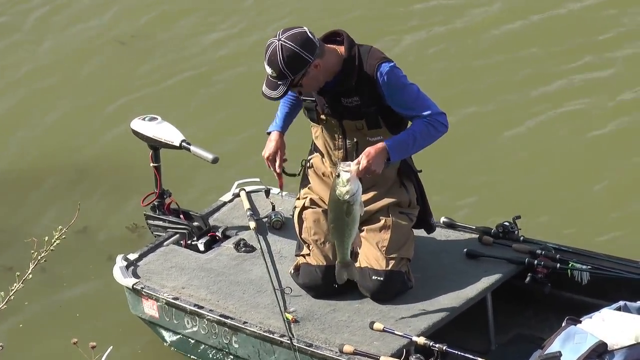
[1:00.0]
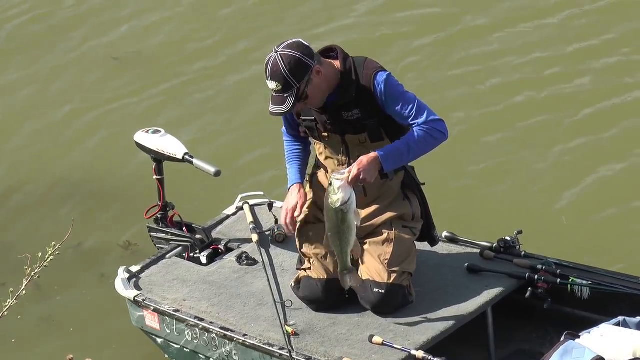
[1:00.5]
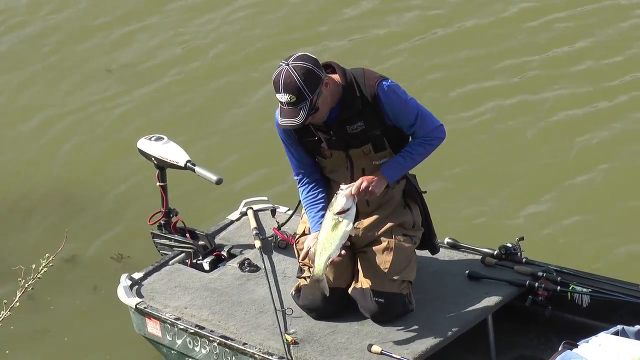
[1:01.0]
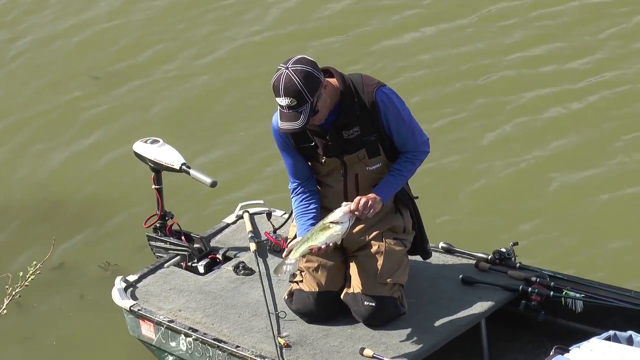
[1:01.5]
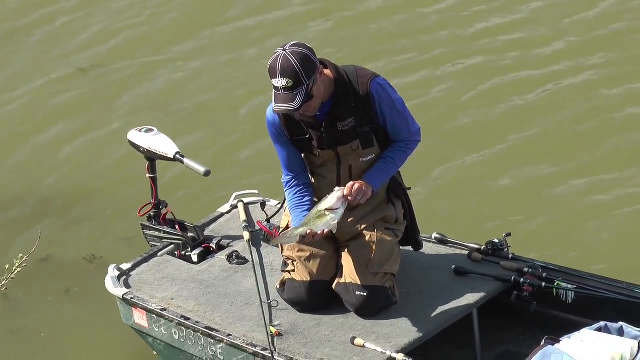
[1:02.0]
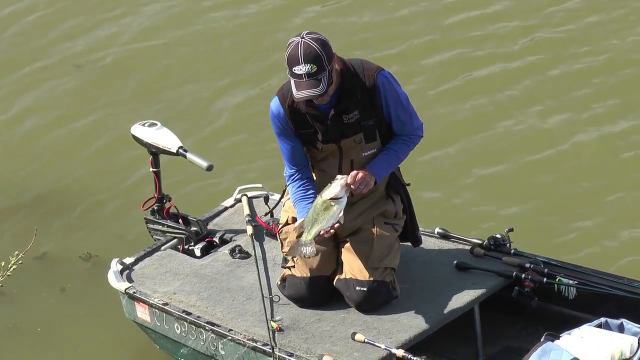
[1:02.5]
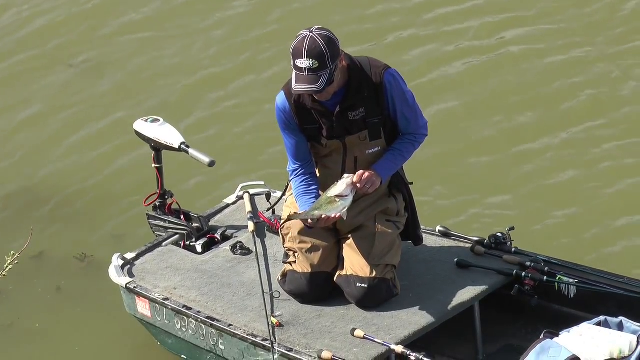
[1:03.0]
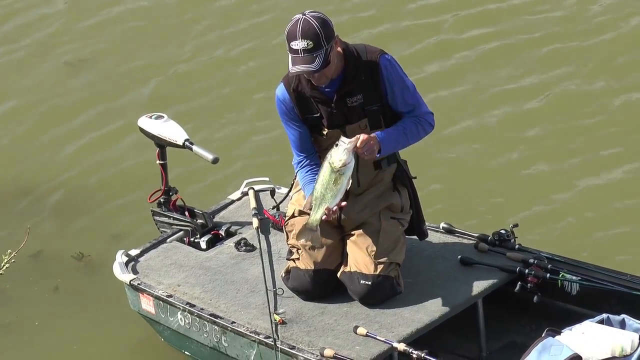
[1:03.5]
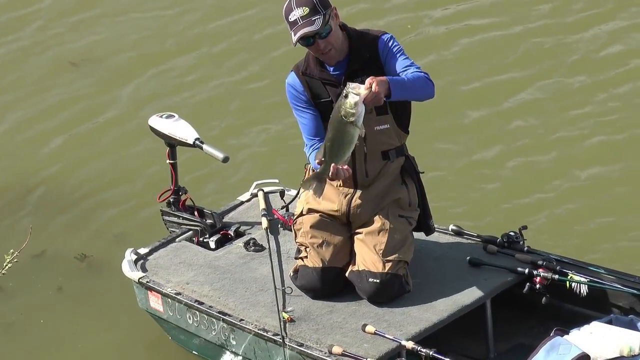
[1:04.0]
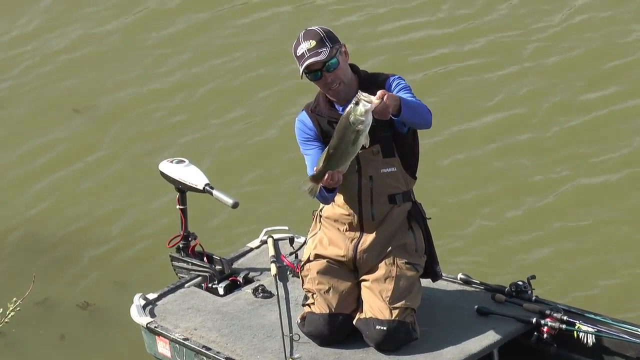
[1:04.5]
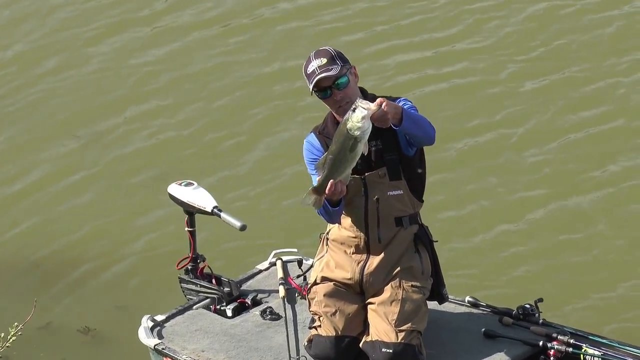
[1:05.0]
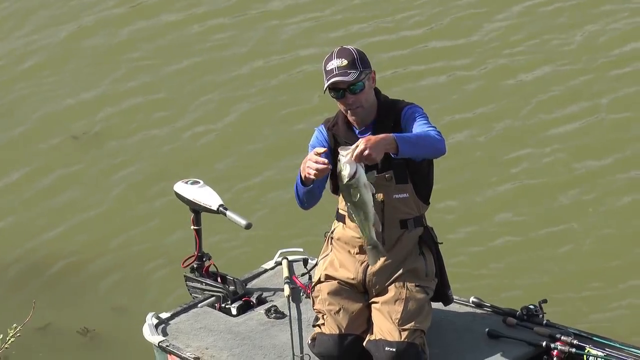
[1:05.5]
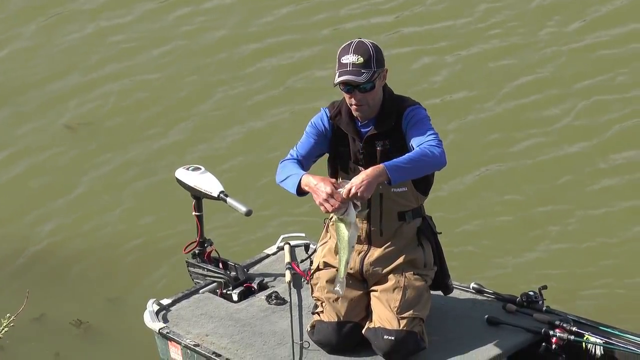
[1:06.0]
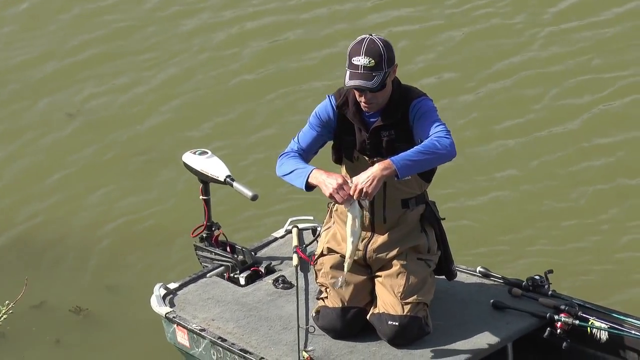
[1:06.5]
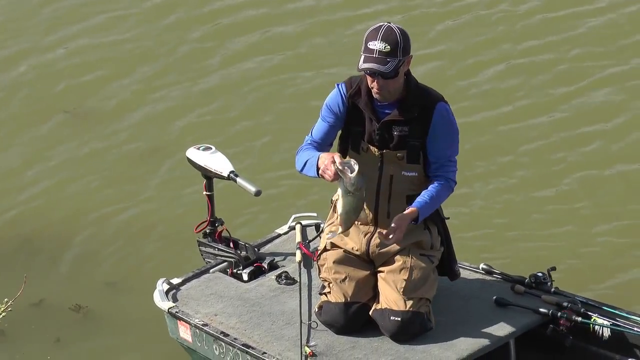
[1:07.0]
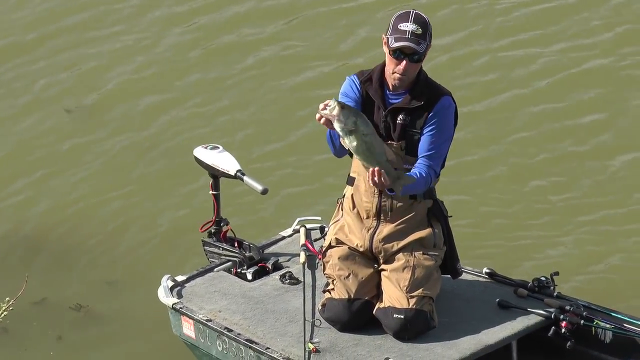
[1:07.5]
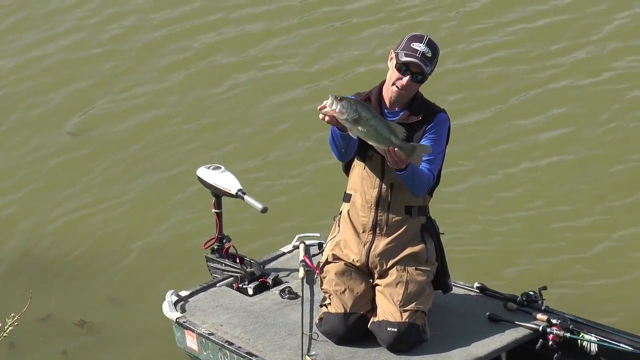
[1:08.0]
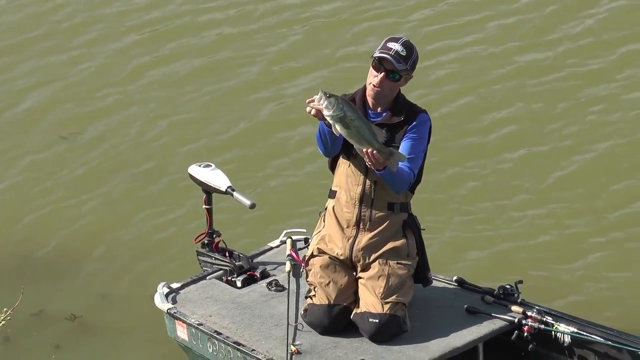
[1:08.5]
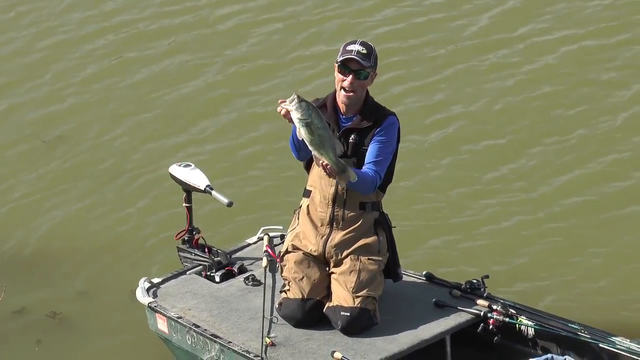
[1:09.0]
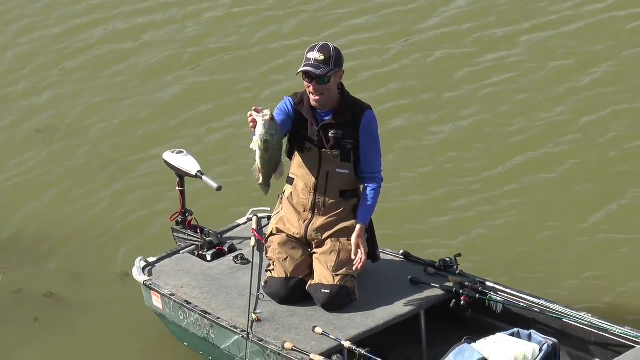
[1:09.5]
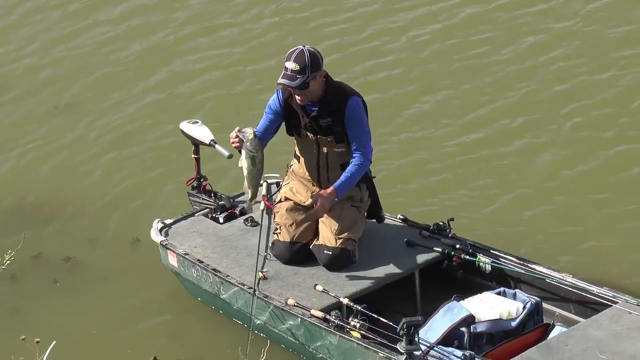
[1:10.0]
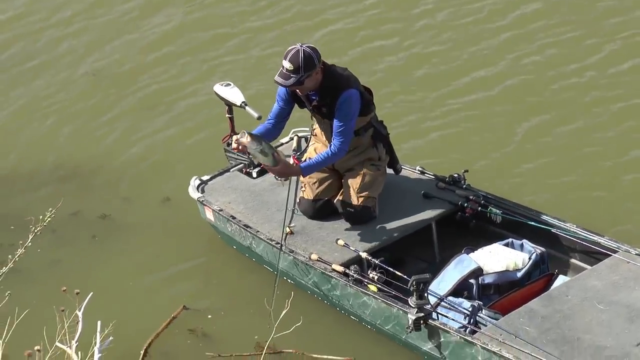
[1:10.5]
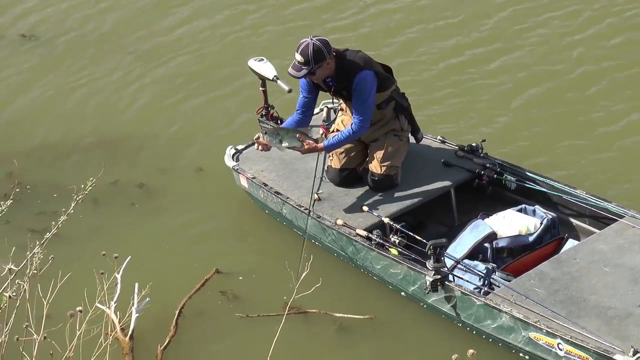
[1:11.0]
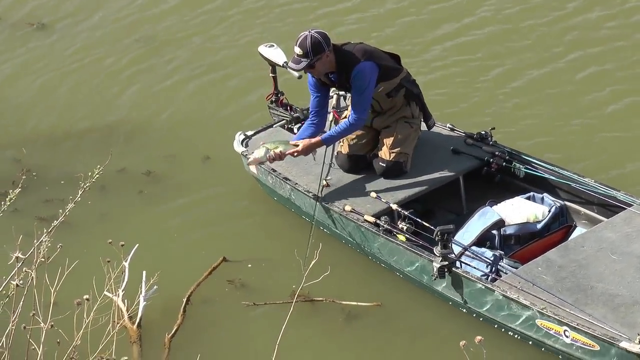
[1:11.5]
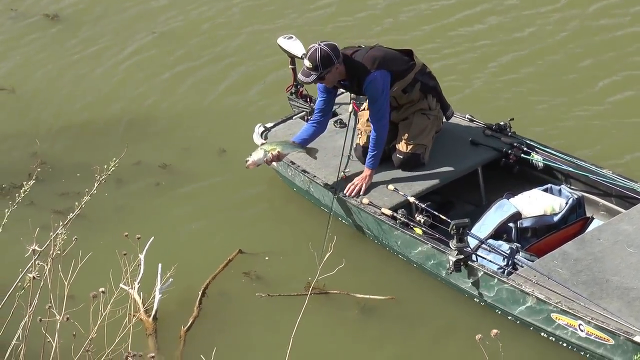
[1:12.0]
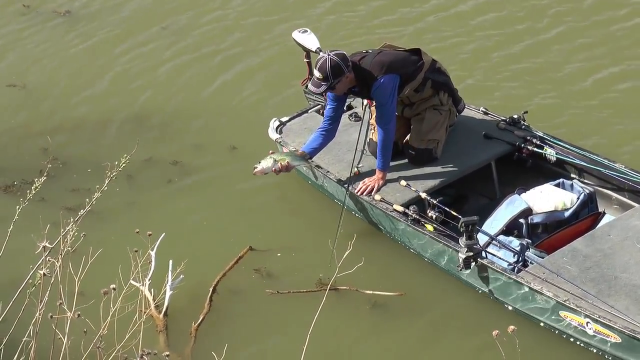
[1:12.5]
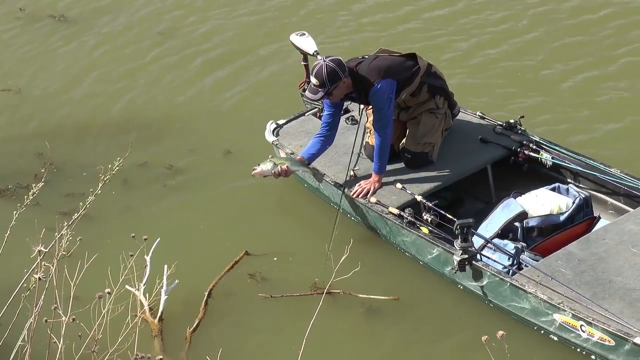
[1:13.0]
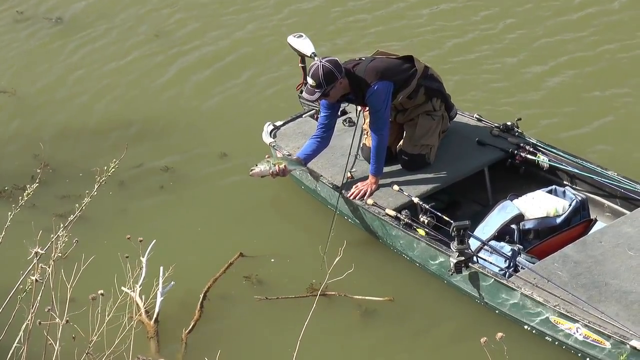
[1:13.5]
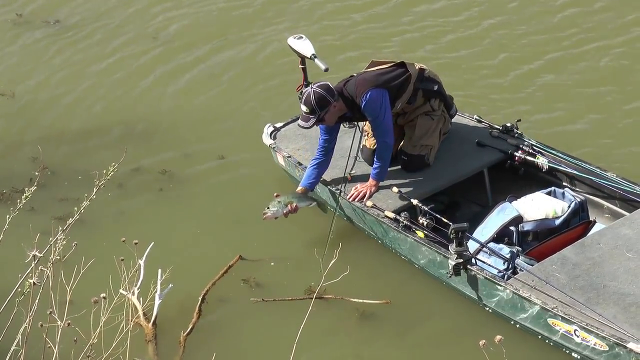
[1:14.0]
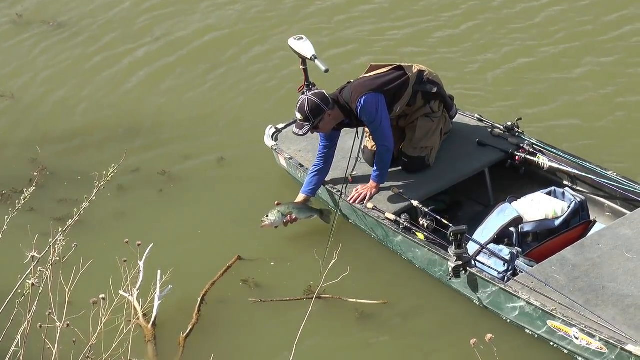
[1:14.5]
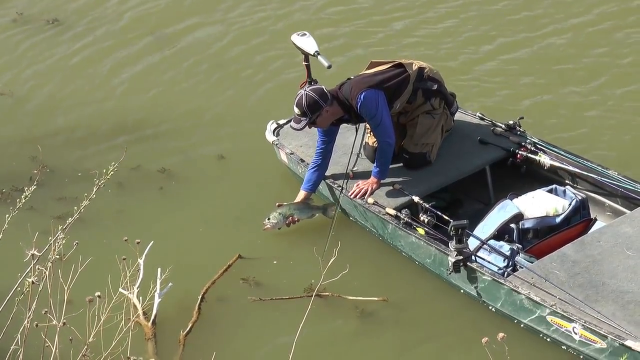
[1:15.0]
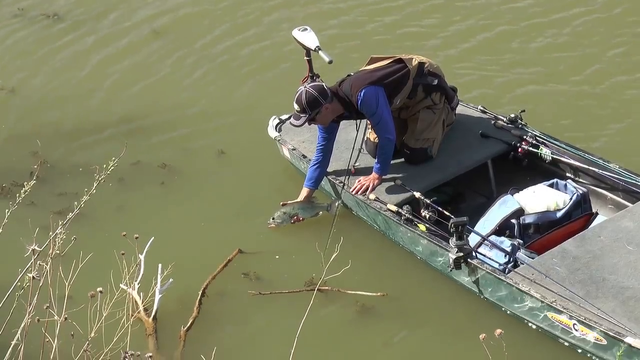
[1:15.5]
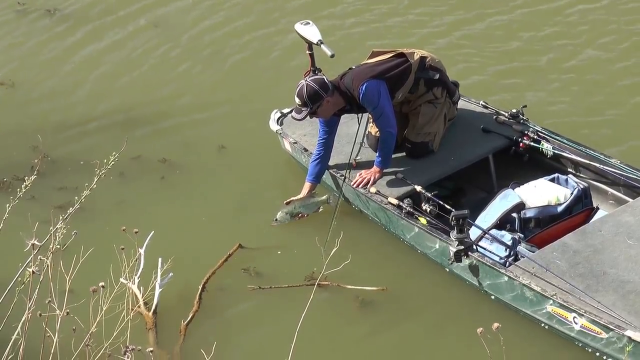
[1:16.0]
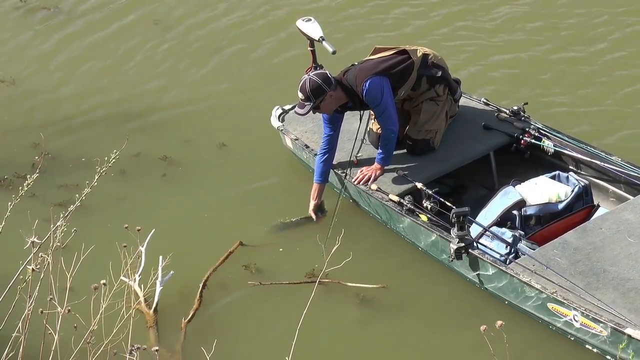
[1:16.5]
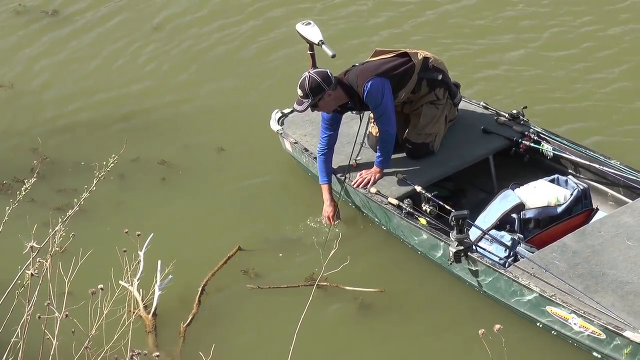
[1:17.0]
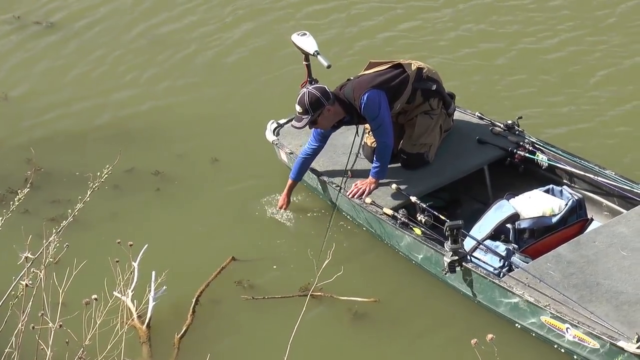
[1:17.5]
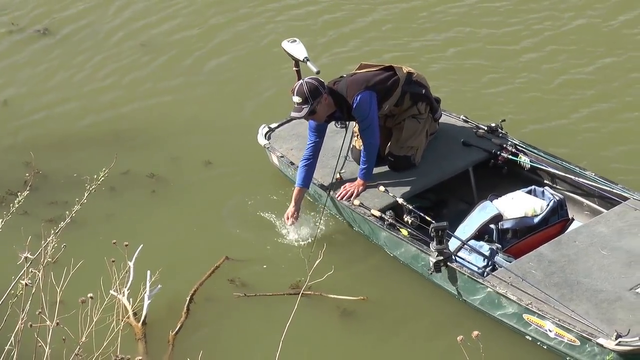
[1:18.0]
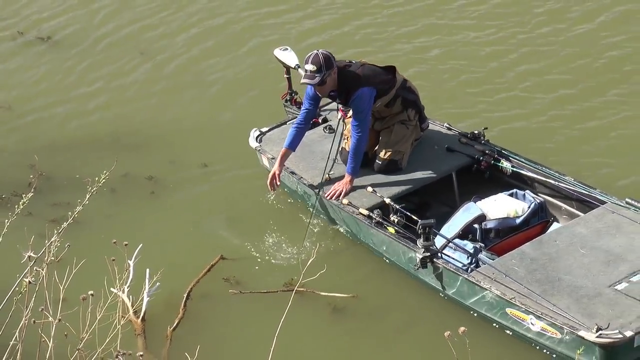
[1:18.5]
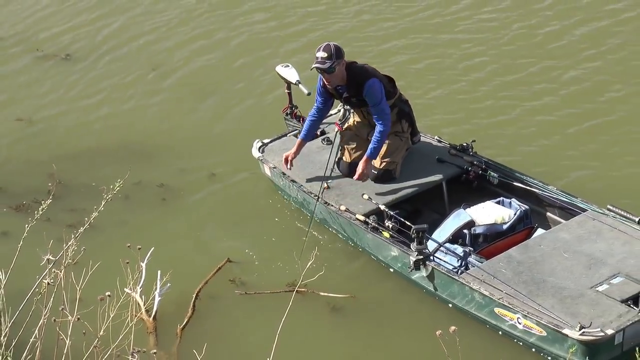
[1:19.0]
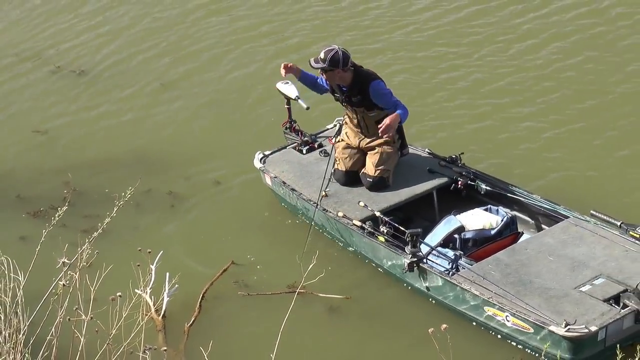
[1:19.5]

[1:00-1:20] The fisherman is on the john boat. A handheld motor sticks up, its handle looking like a bowling pin split right down the middle, with half of it used to steer the boat. He holds the fish out in his hands, sizing it up, with its mouth in his left hand and its tail in his right, kind of extending it to get a look at it. The fish has kind of a greenish stripe down its side, and the rest of its body is silver. He turns the fish around, switches hands, and places it back in the water; the fish swims off. He washes his hand in the water and reaches around himself as if to dry it off after letting the fish go, a catch and release.